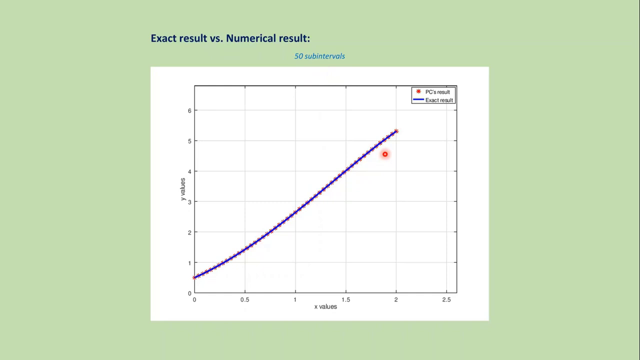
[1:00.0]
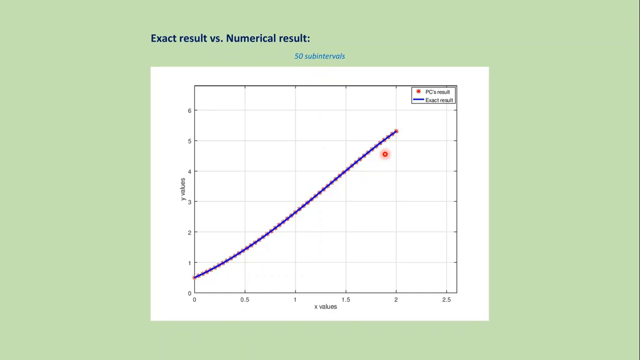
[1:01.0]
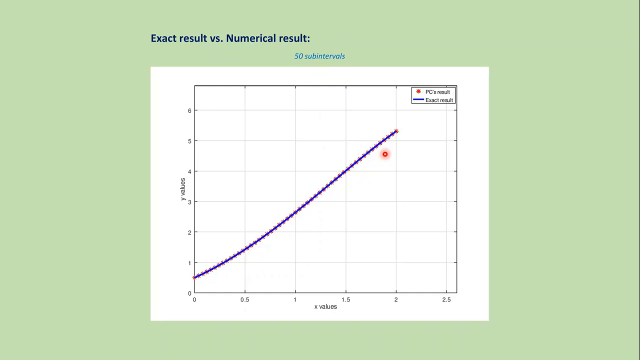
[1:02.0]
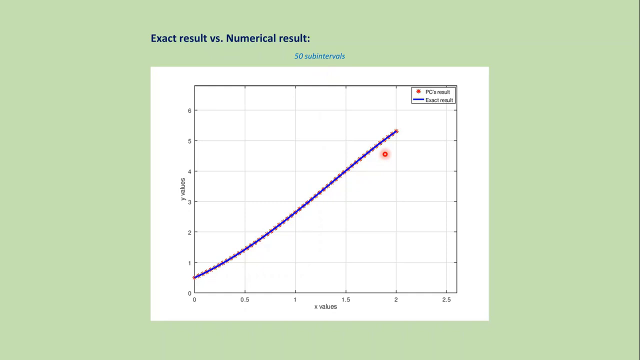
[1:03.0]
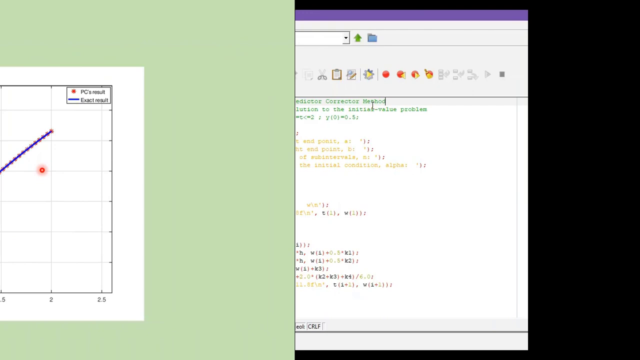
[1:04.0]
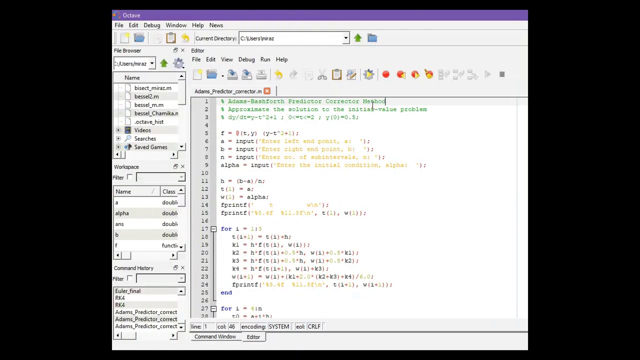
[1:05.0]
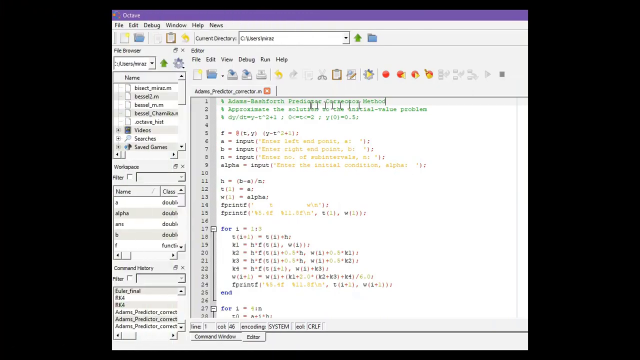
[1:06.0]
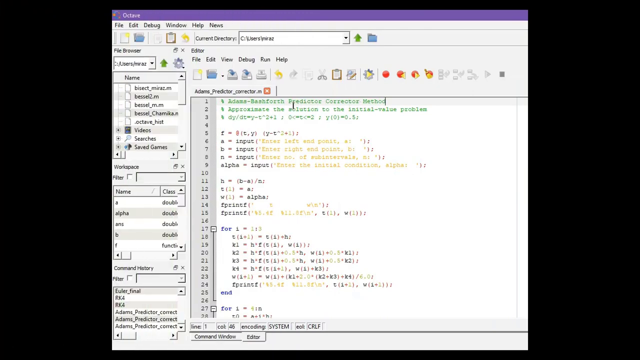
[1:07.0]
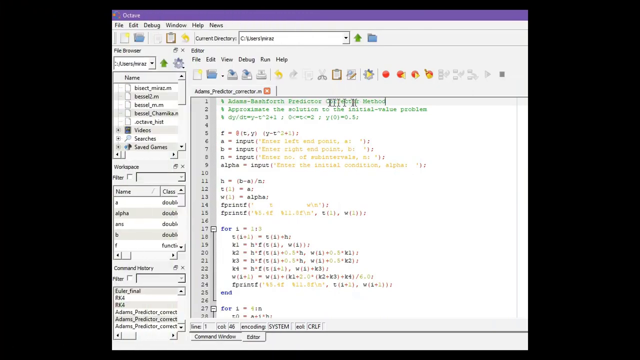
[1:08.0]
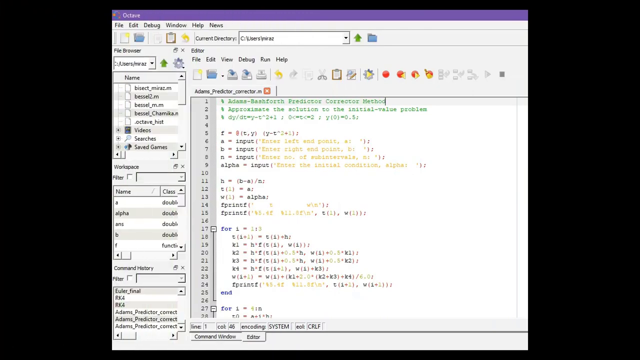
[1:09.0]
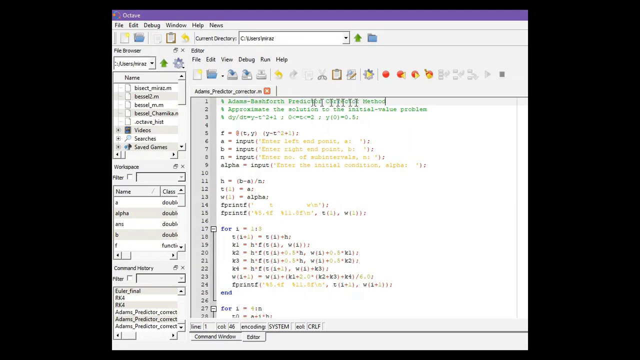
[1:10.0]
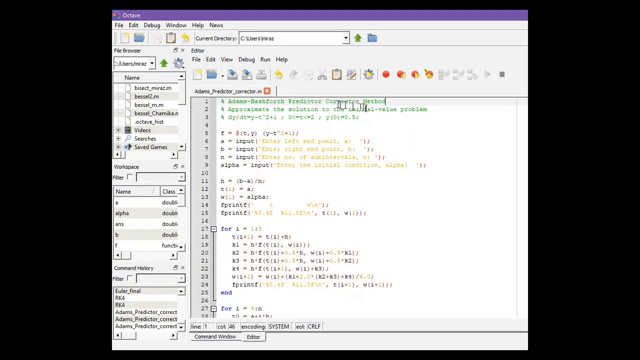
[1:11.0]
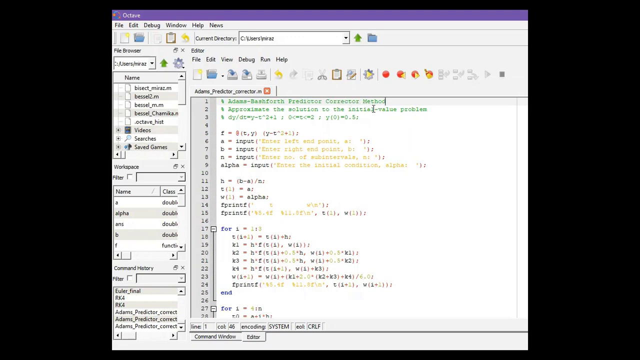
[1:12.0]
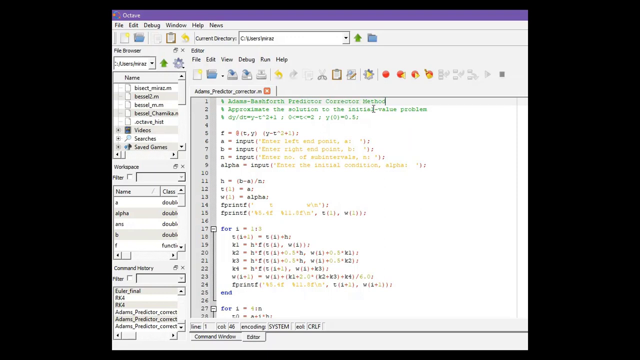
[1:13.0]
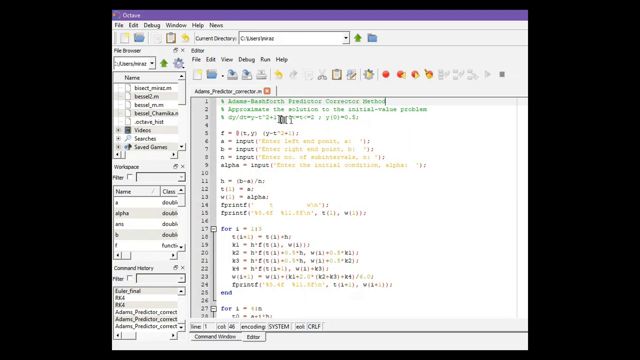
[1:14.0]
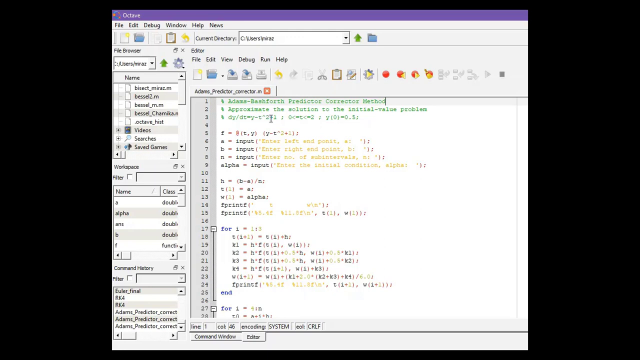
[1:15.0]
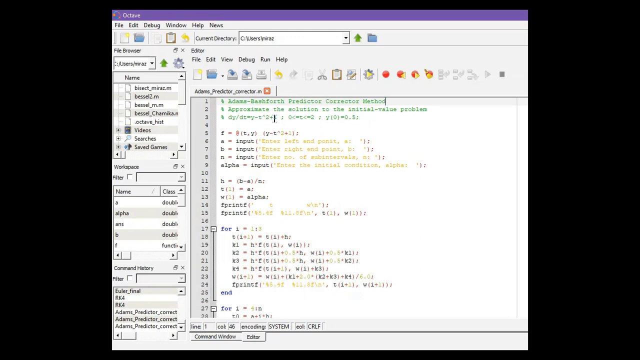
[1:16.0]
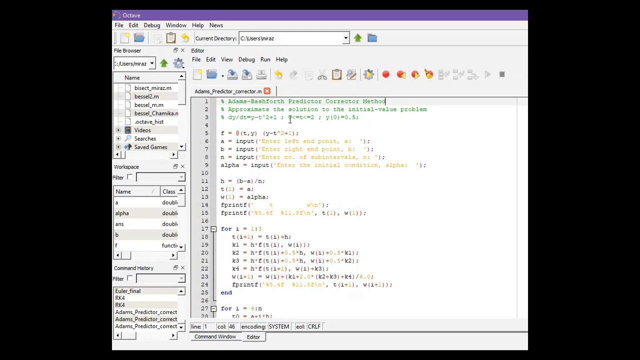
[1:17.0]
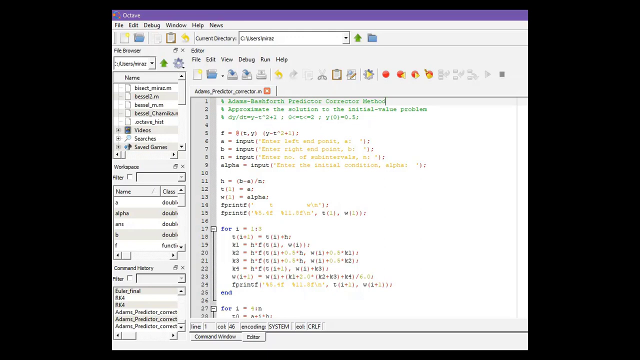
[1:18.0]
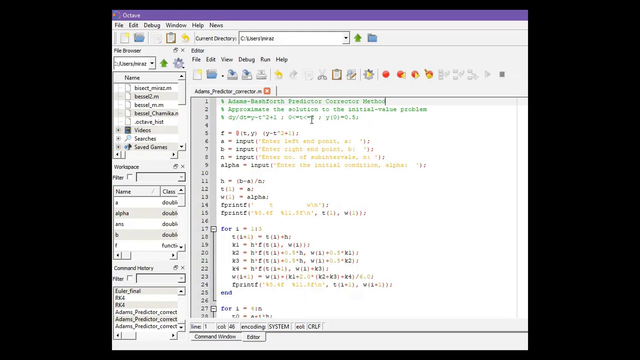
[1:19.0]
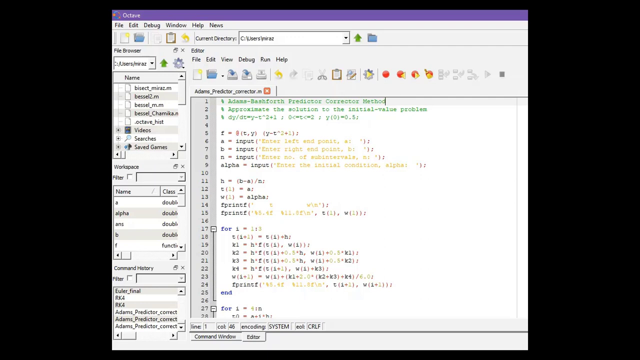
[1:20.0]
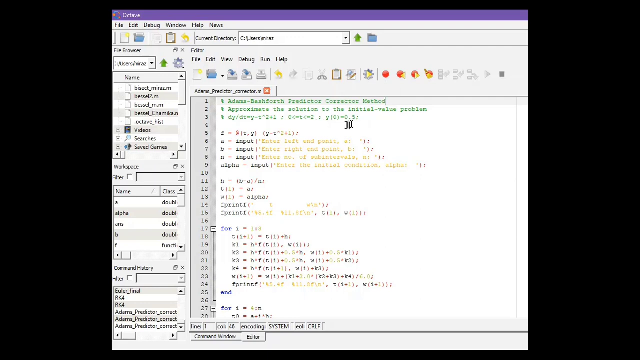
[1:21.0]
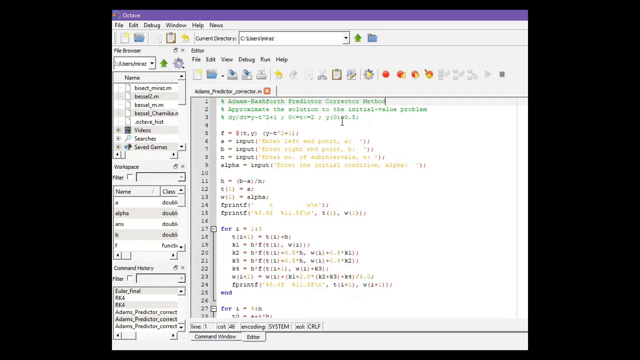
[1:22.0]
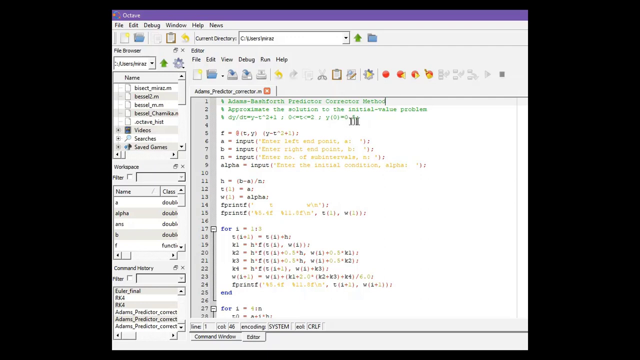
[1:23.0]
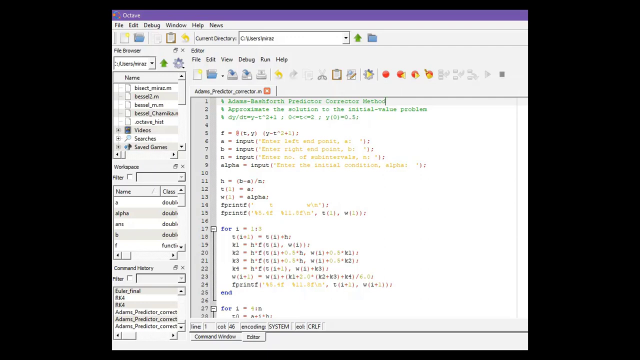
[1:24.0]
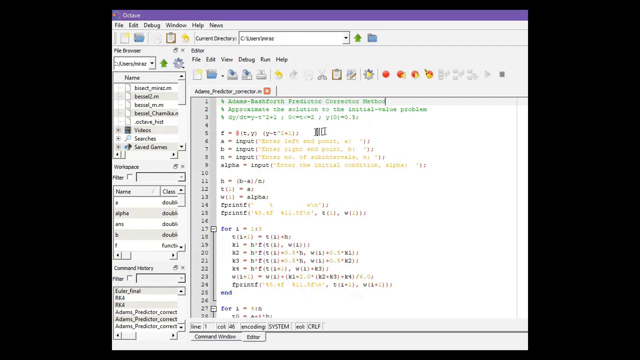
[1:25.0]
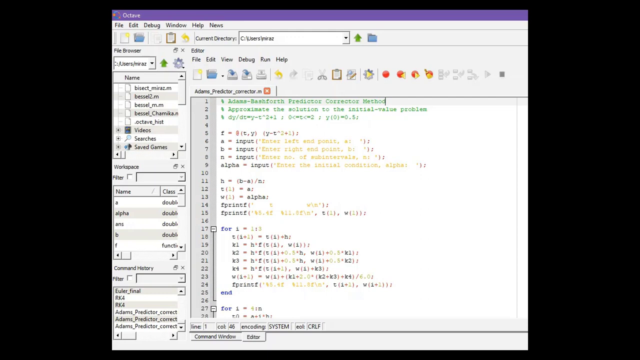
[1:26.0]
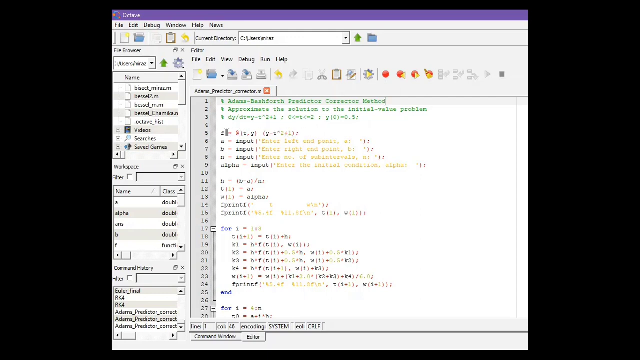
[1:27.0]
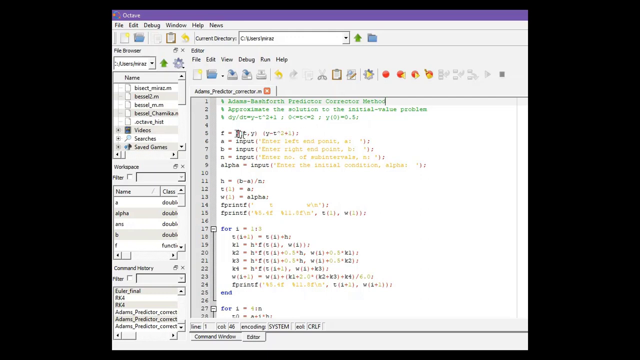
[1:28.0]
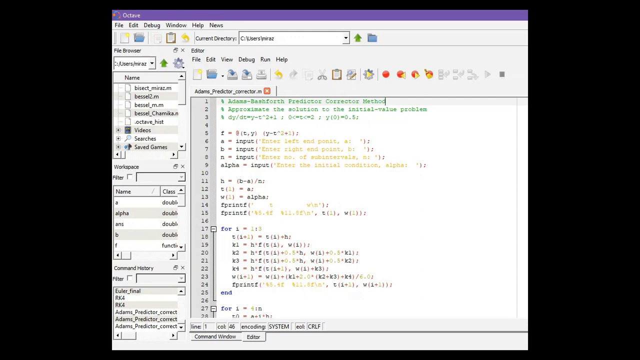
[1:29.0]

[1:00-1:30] A chart on the screen has a blue line running from the lower left up past the upper middle part of the chart. Inside the chart, a box describes the lines and dots: the red dot is the PC's result and the blue line is the exact result. The video then moves to a different page that looks like a Word or WordPad-type document, with a bunch of lines of code on it. The page has no title, but an open tab begins with "Adams Predictor Corrector," so this is possibly the predictor-corrector code. The mouse pointer moves along the top lines of text, which are in green font, and leaves a trail behind it as it moves, so it seems to be a custom mouse pointer.